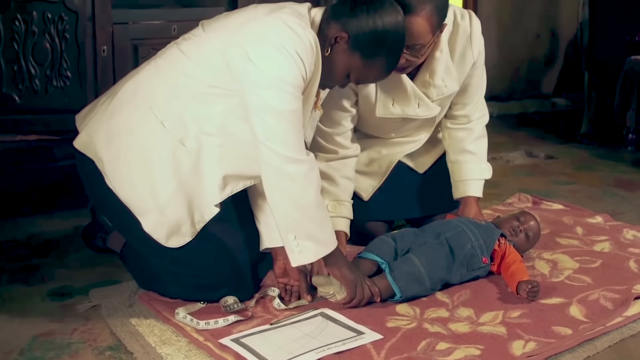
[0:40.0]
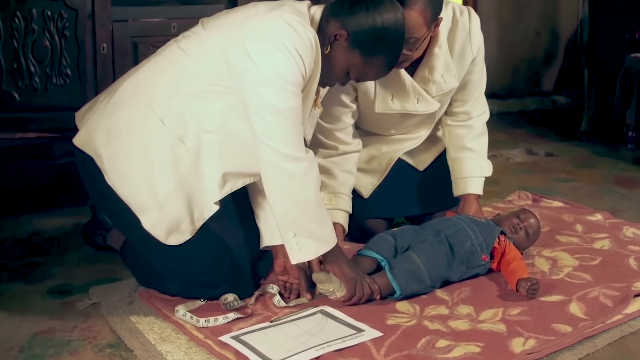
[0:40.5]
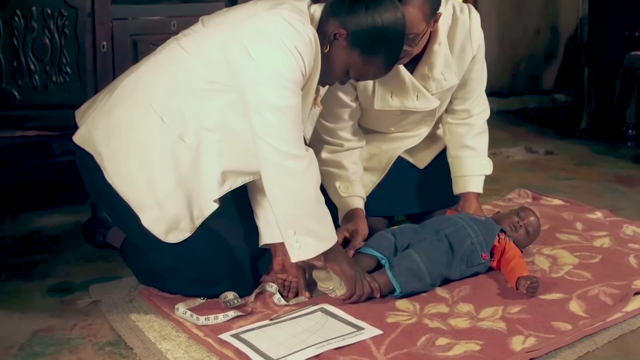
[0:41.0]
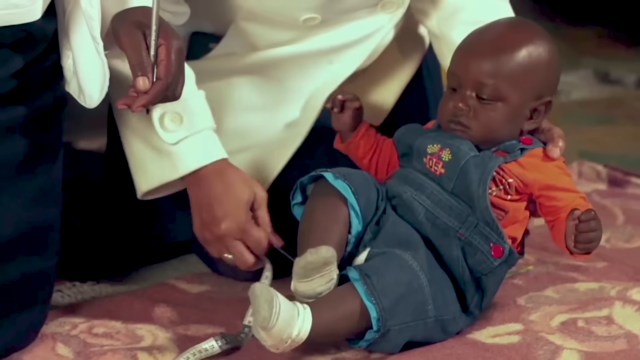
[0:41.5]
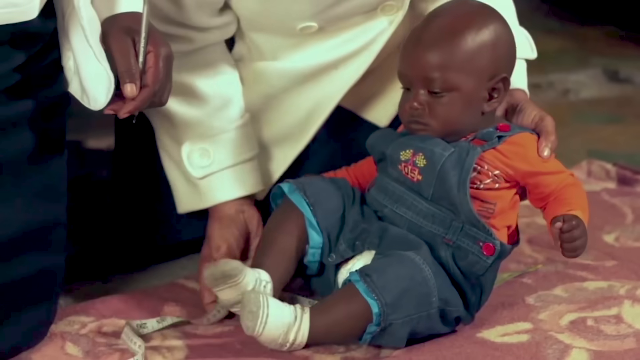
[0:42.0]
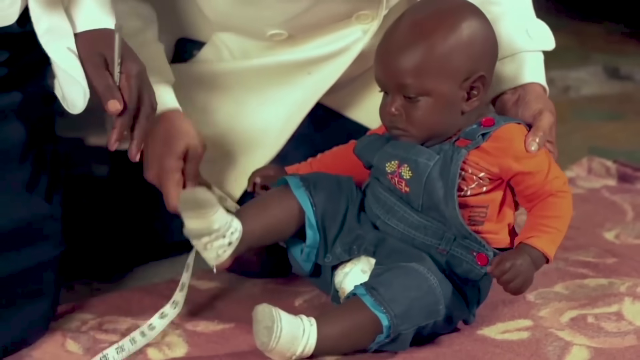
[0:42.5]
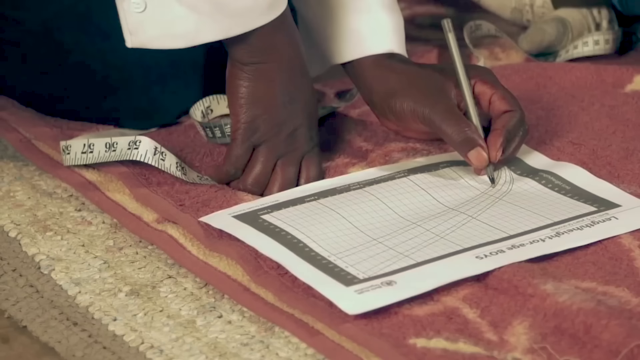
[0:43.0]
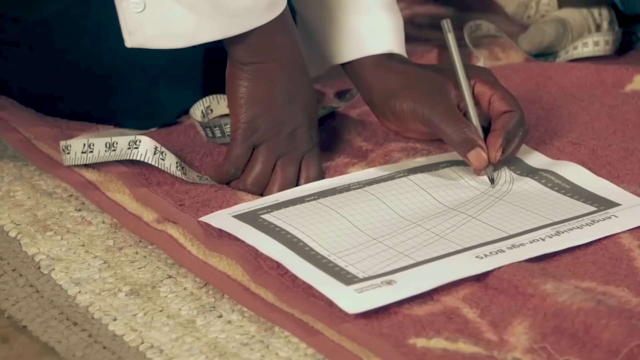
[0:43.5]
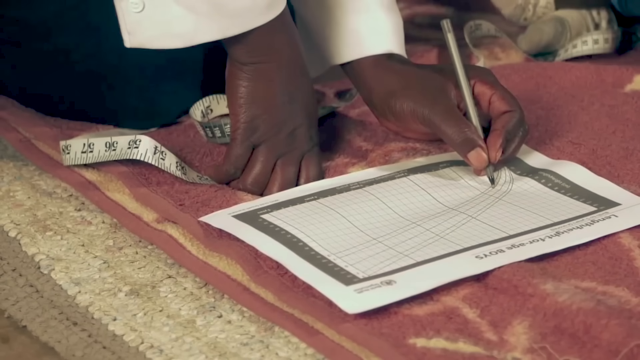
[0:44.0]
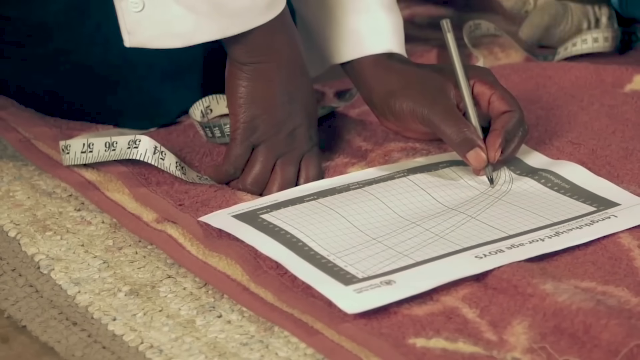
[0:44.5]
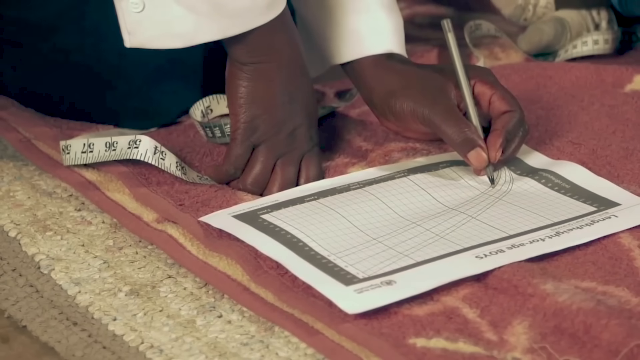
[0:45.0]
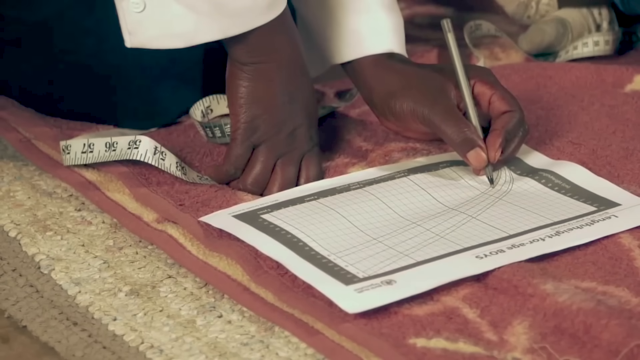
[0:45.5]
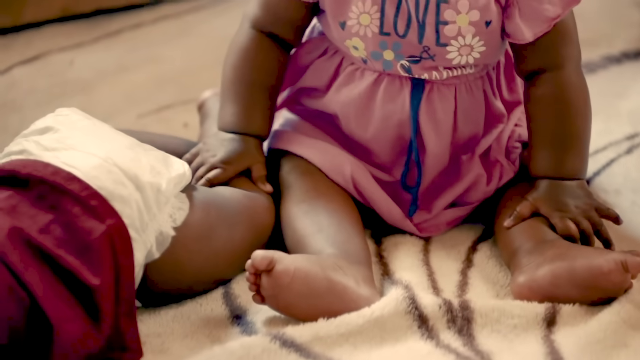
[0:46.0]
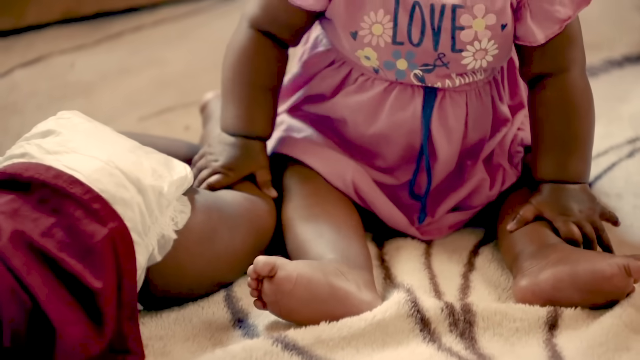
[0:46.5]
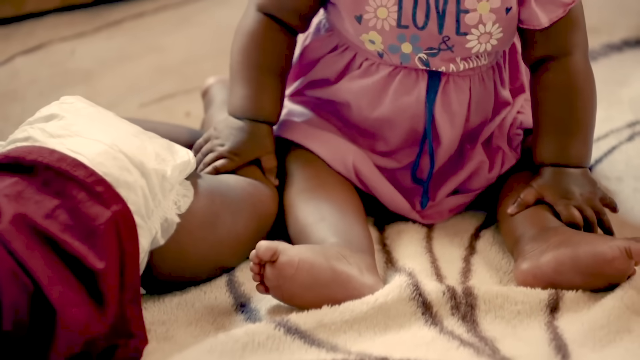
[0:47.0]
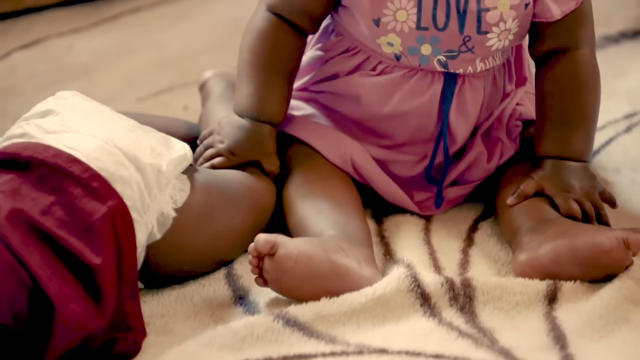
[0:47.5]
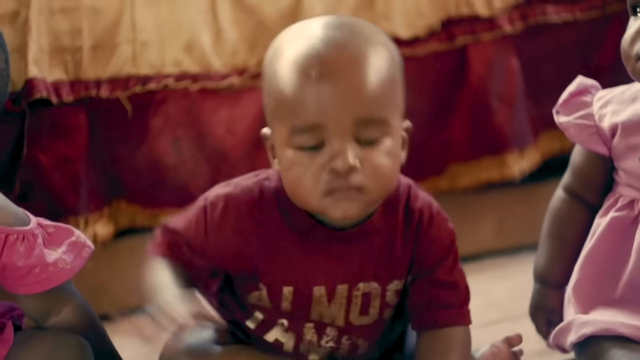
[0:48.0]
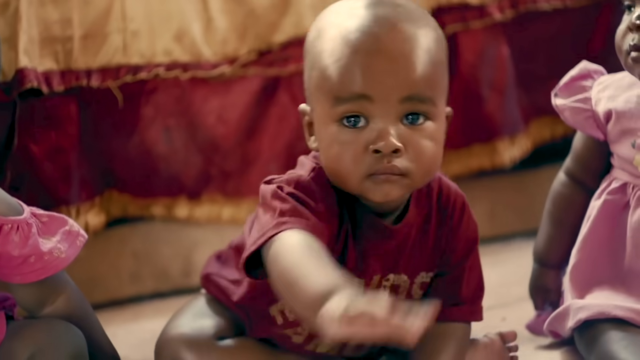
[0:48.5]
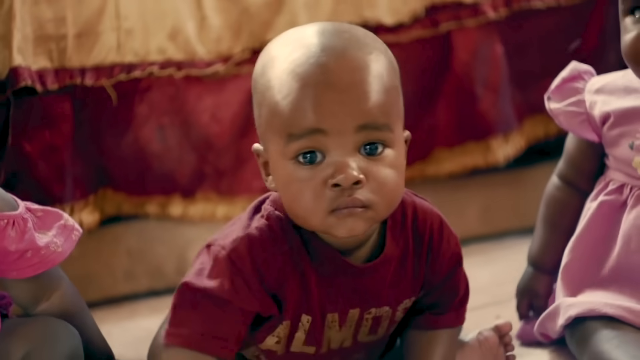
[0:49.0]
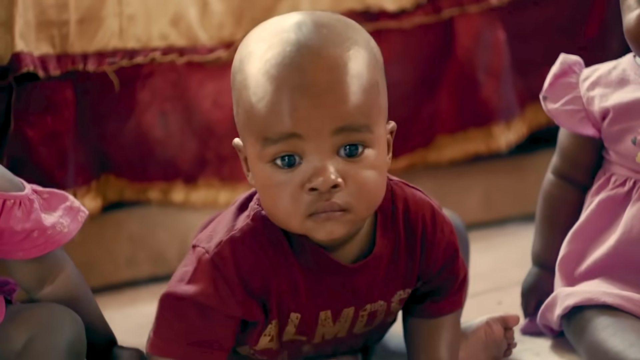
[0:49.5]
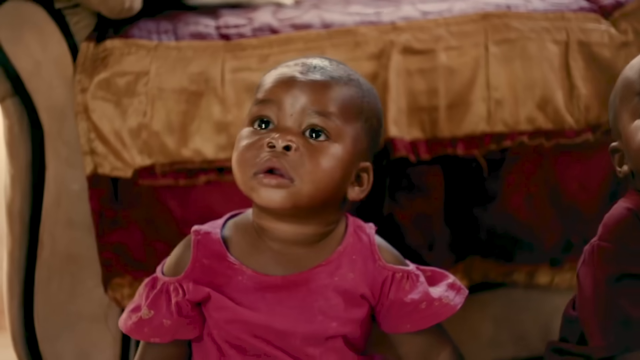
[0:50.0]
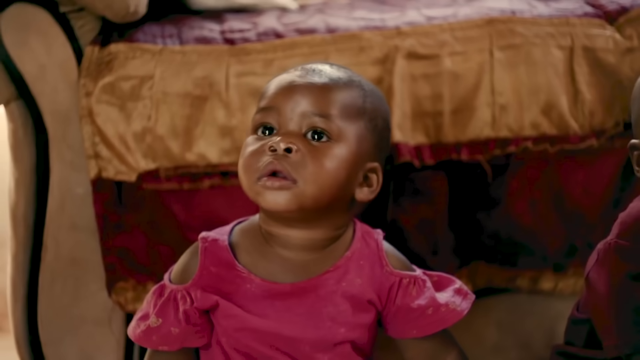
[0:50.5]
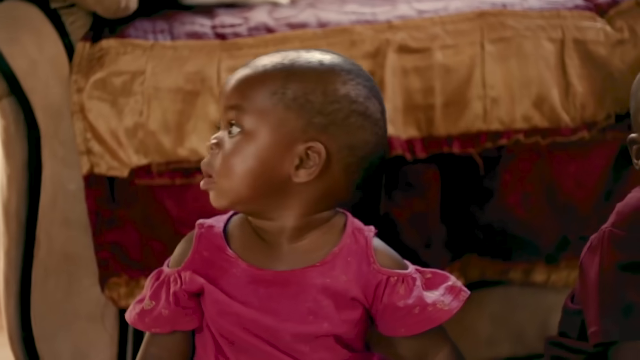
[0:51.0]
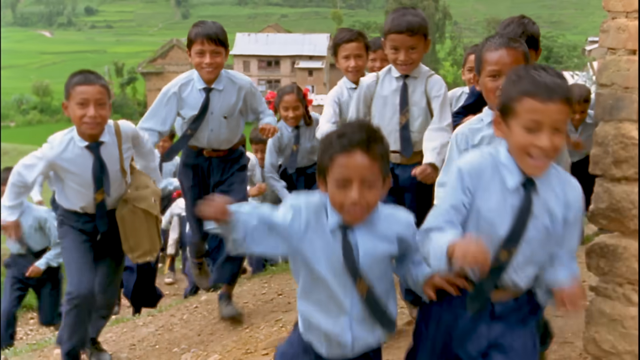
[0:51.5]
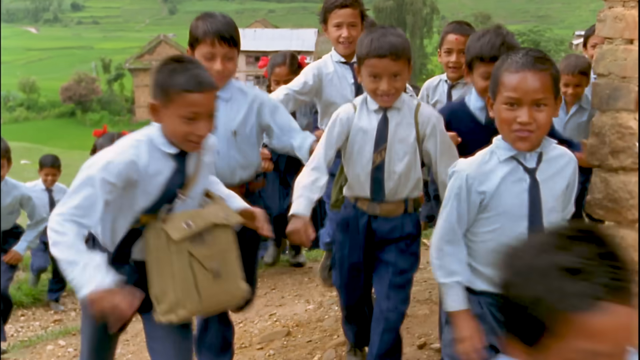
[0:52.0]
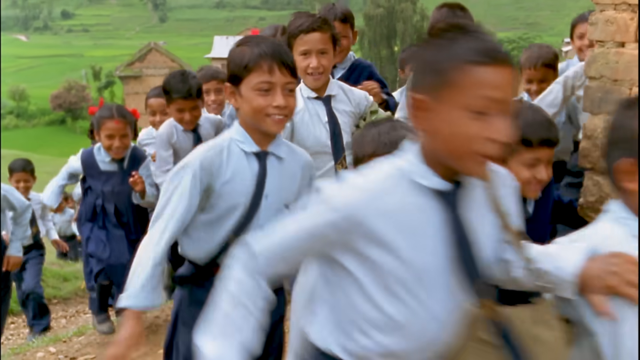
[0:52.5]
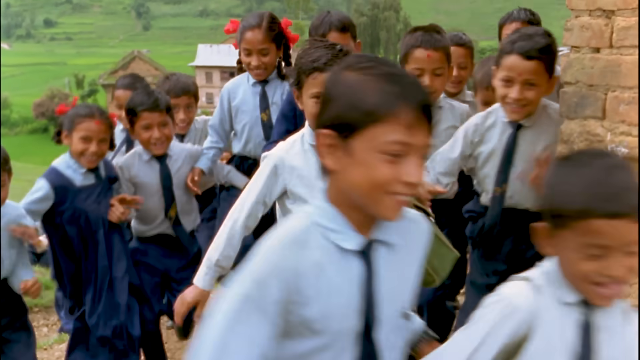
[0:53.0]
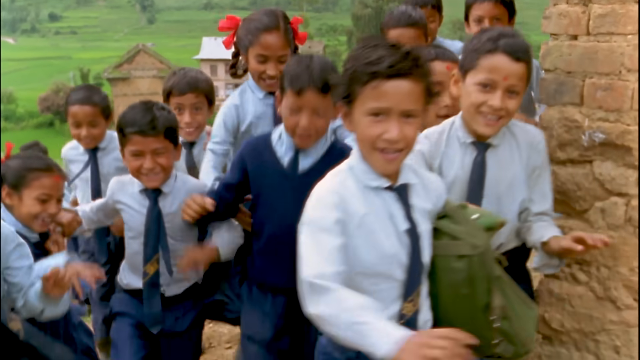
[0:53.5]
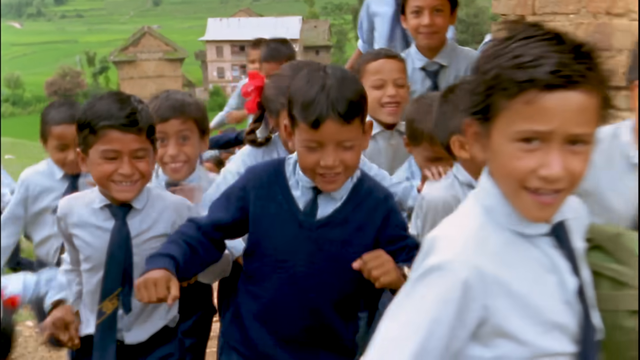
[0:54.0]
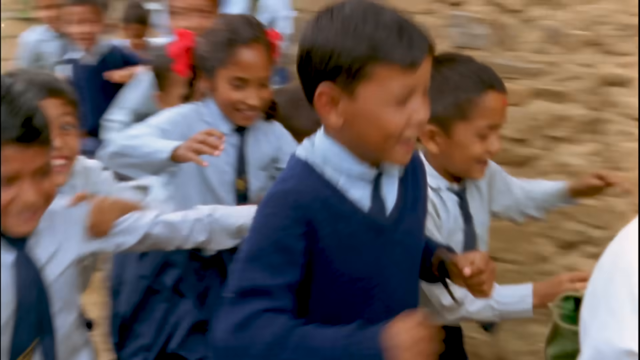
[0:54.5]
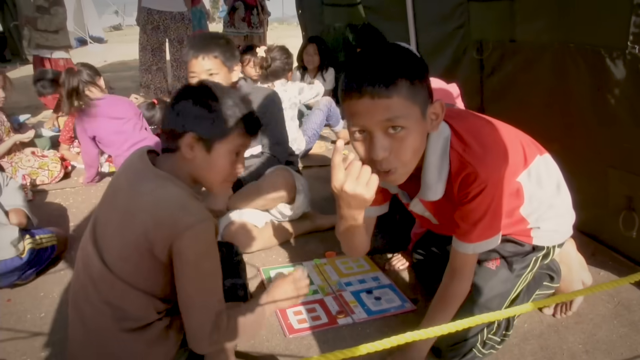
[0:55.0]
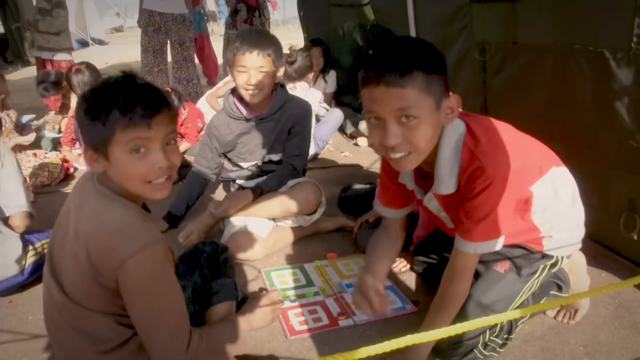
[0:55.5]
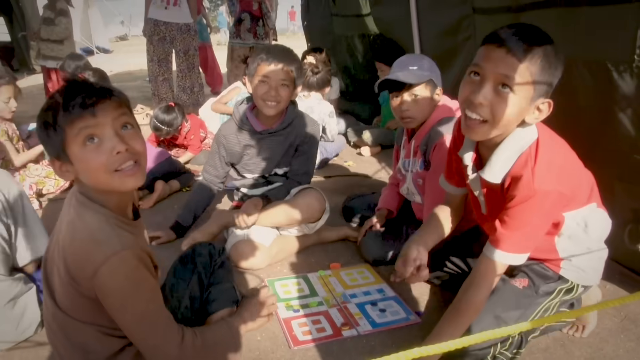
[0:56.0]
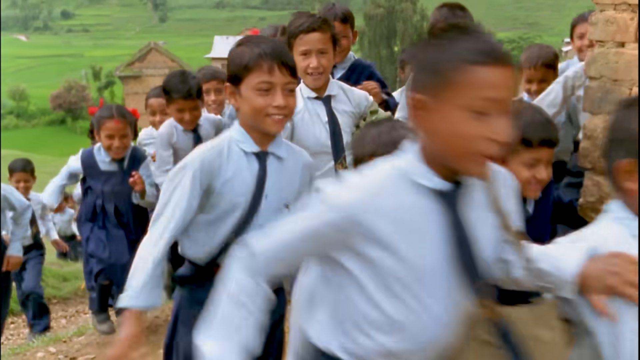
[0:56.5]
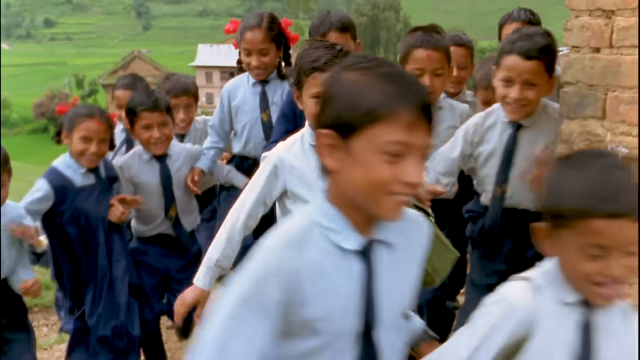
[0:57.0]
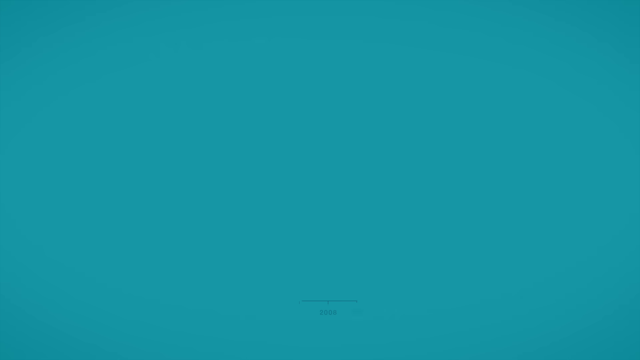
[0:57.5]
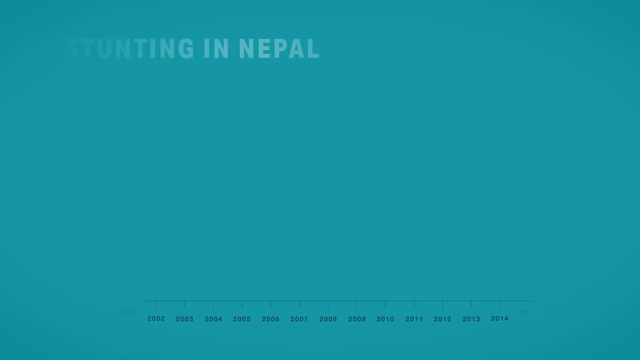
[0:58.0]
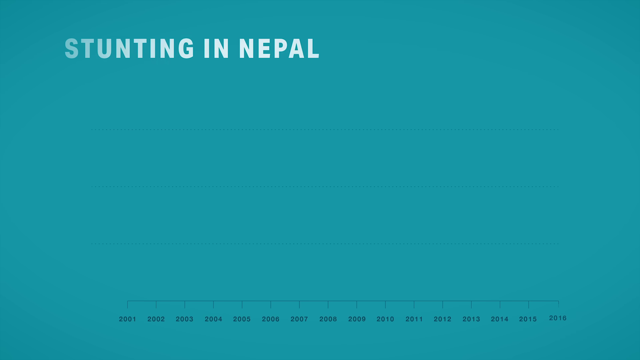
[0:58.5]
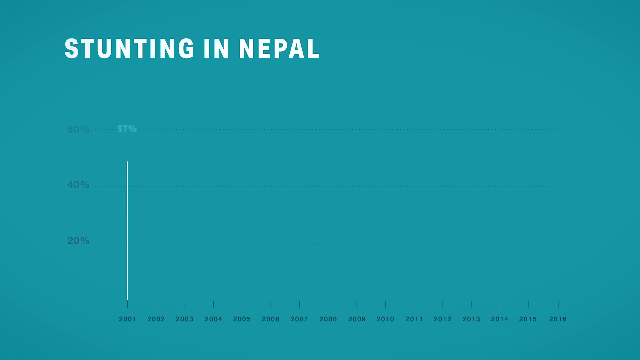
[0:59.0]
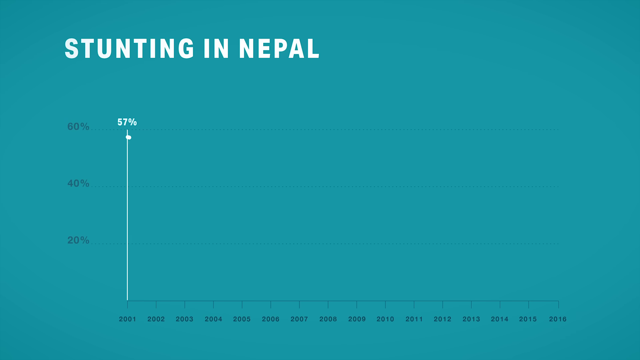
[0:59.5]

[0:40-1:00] Inside a room, a very small child lies on a blanket on the floor, tended to by two women in smart white coats. The women have a tape measure and a piece of paper, and they appear to be taking measurements from the child and writing notes on the paper. The scene changes to more young children who look to be of African heritage. Then a different video shows a group of children, maybe 8-10 years old, running around the outside of a building; they wear a blue school uniform and look to be from an Asian country. Another scene shows a group of young children, maybe 8-10, playing outside. The video ends on a web-based graphic of a graph about stunting growth in Nepal.